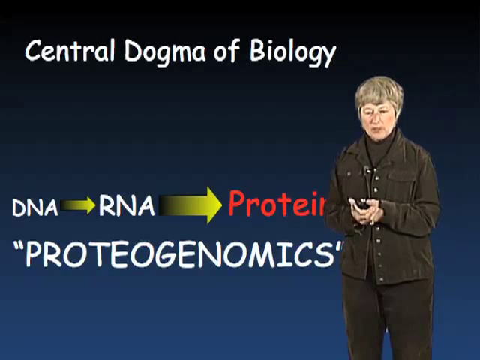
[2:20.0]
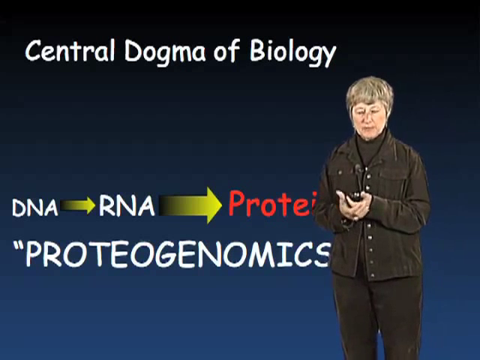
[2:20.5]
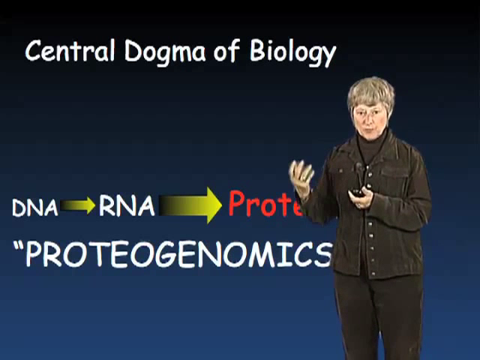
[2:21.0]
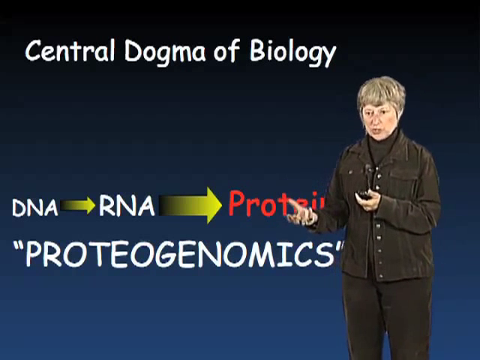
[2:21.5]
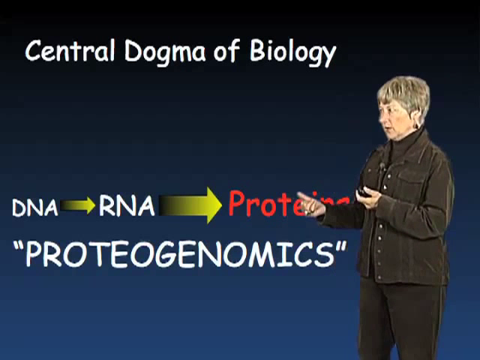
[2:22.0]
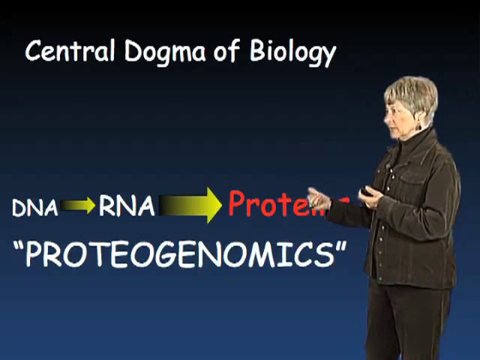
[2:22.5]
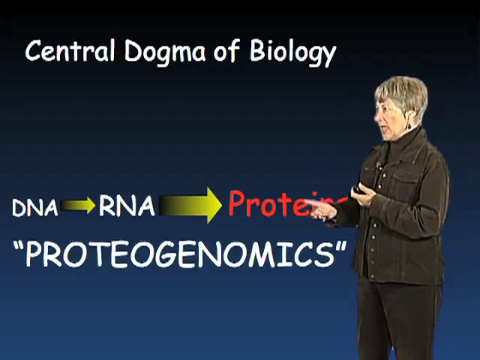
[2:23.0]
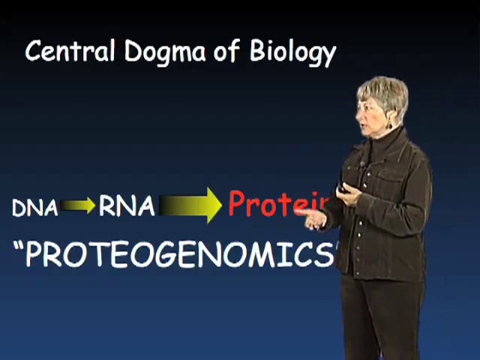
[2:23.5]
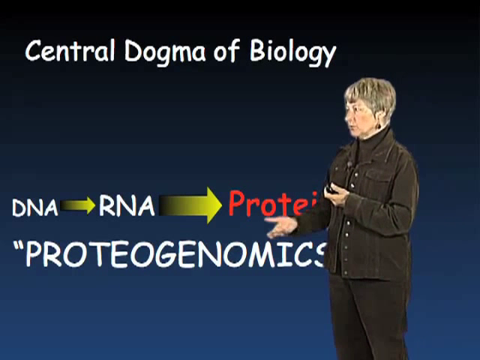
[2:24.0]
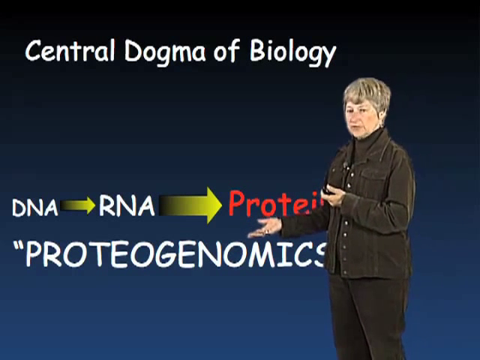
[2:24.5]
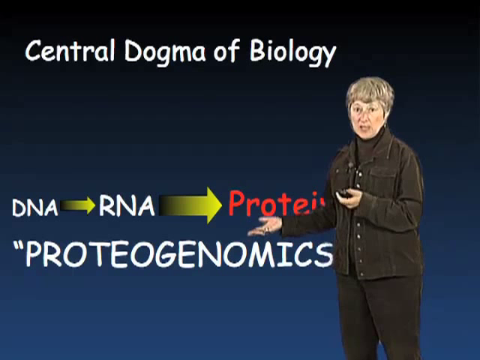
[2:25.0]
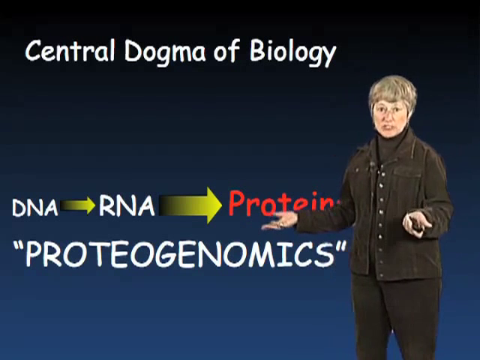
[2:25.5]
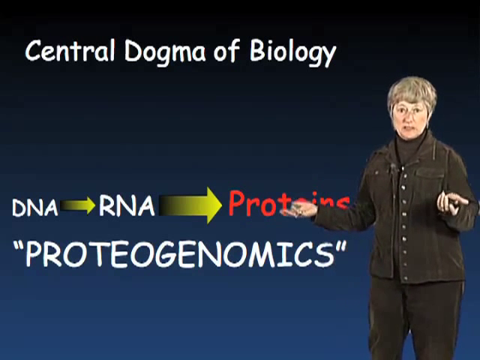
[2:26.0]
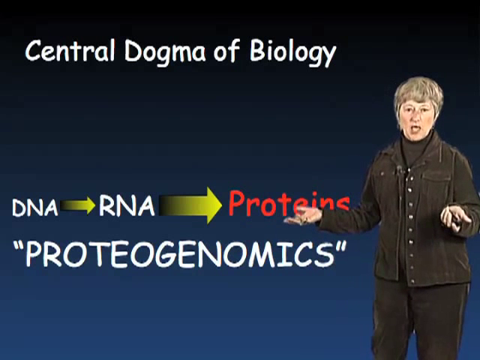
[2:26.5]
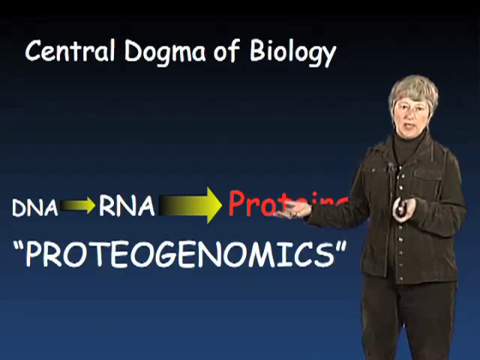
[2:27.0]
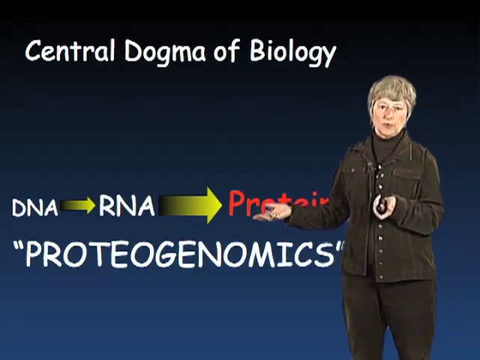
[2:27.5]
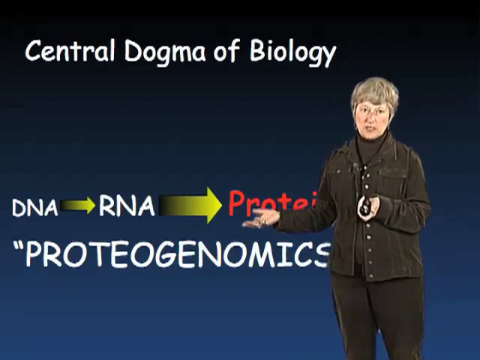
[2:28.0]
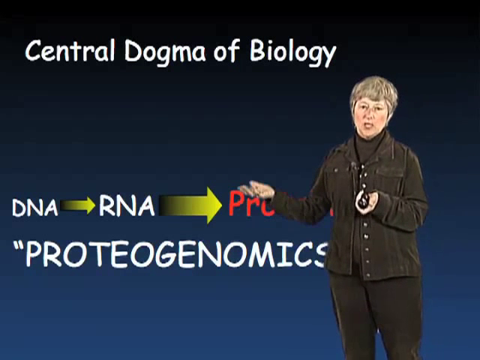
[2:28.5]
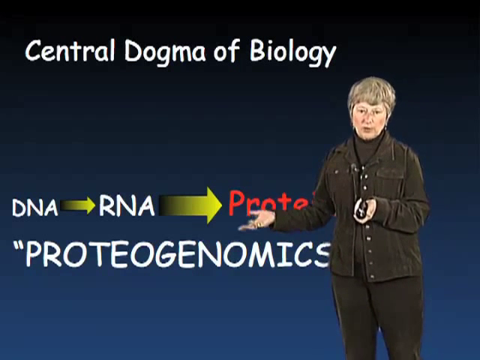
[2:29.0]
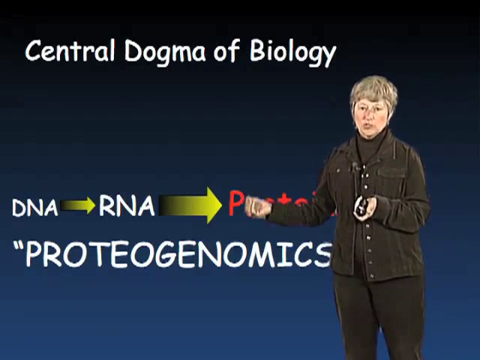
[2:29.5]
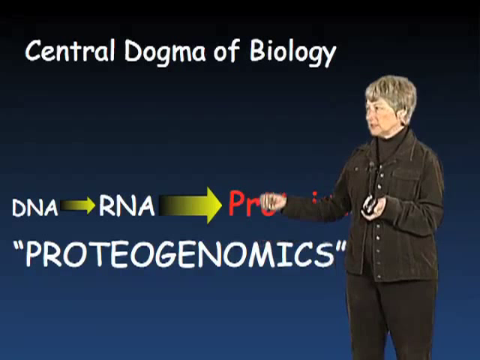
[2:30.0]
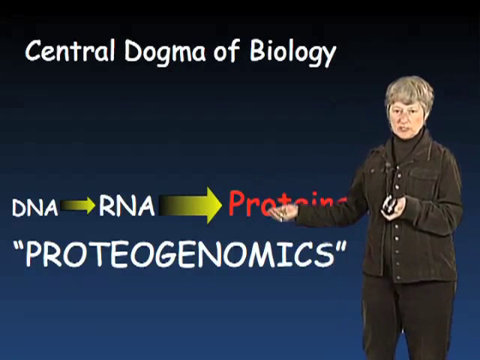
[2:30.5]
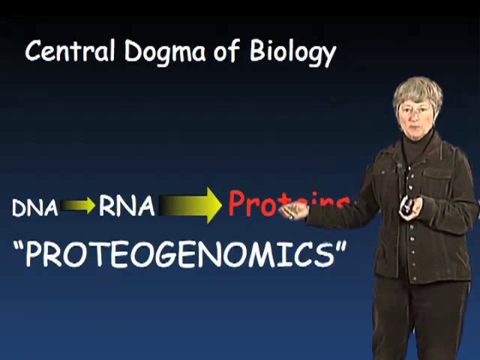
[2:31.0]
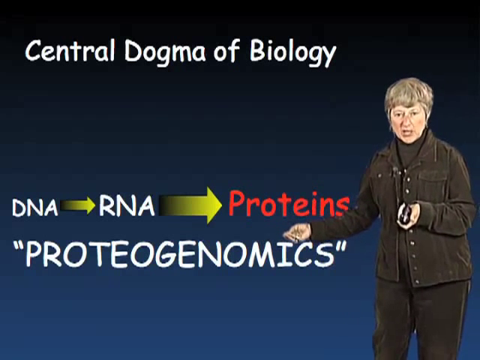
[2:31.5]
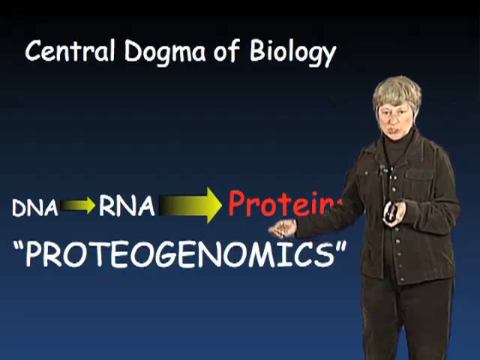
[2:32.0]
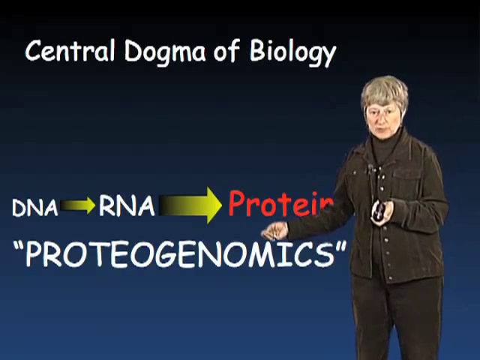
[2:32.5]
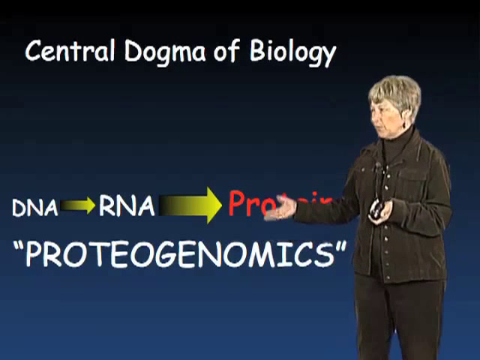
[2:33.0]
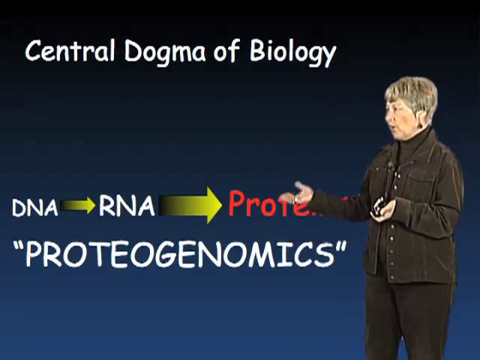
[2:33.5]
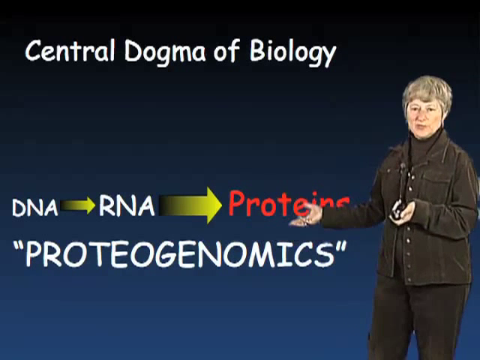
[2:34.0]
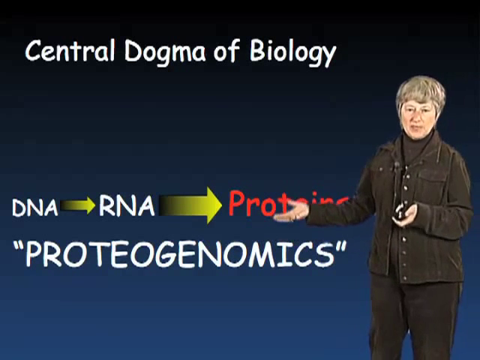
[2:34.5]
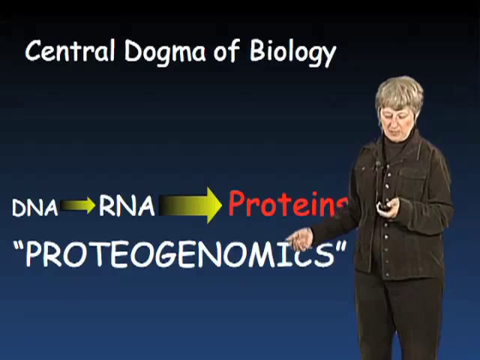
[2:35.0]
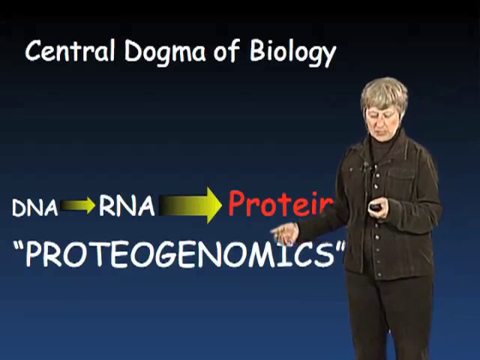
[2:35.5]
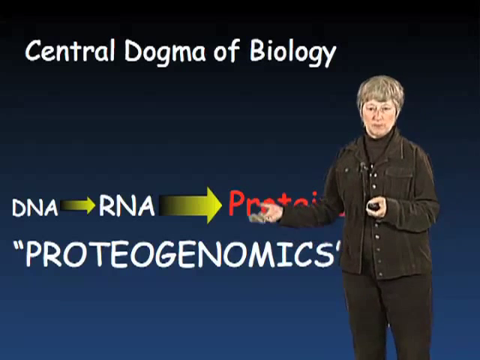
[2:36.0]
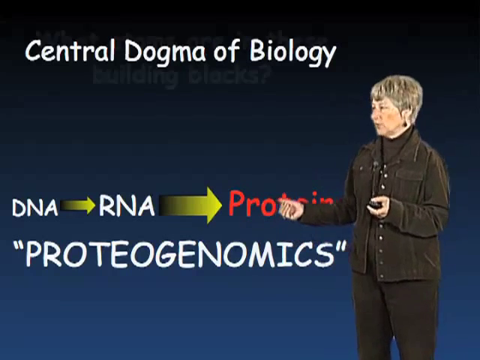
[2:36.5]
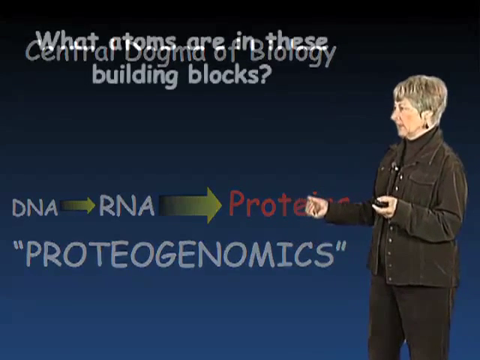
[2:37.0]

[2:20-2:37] The screen shows the text "Central Dogma of Biology," and the bottom of the screen says "DNA to RNA to proteins, proteogenomics." A Caucasian woman wearing gray, with gray hair, is in the bottom left corner, holding a clicker in her left hand. She speaks to the camera, then turns toward her right and gestures. Very faded, barely legible words behind the title come into view, reading "what atoms are in these building blocks," while the words "DNA to RNA" and "proteogenomics" at the bottom fade. At the end, the woman is in the bottom right corner of the screen, holding the clicker in her left hand and gesturing with her right hand, her fingers closed over her palm.